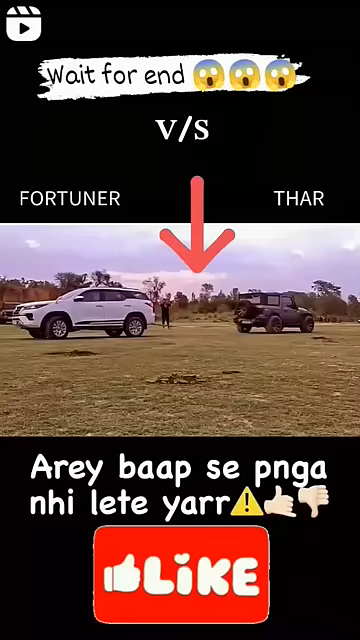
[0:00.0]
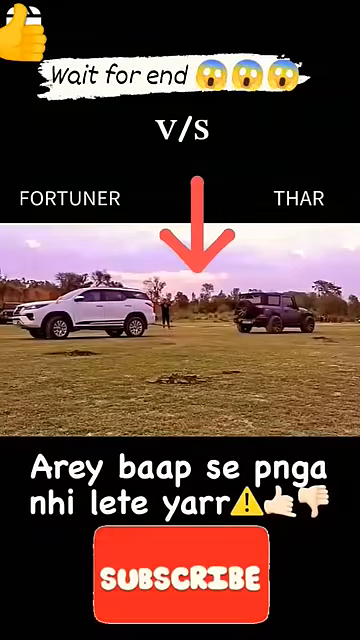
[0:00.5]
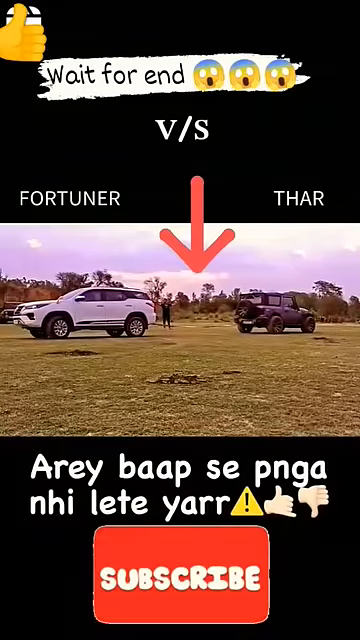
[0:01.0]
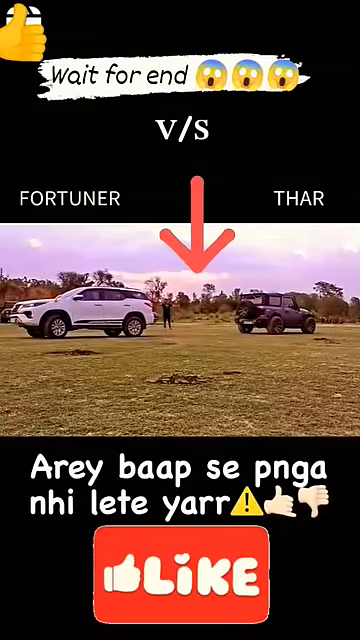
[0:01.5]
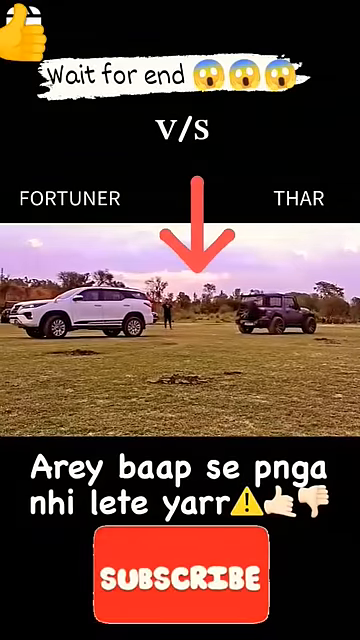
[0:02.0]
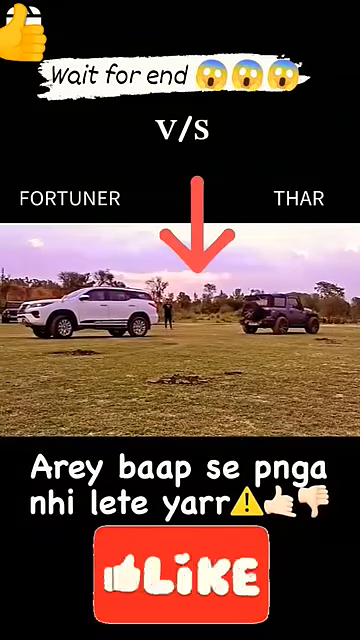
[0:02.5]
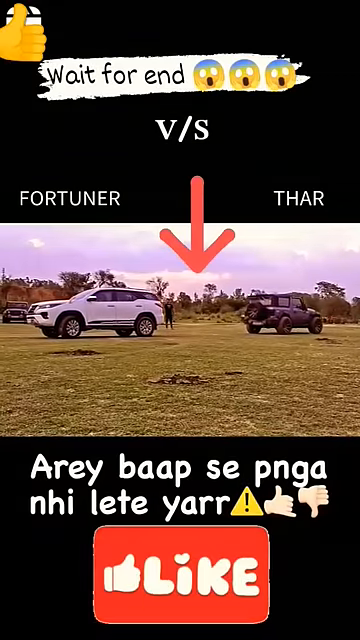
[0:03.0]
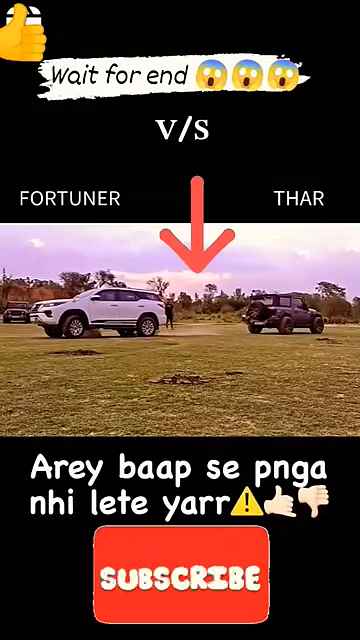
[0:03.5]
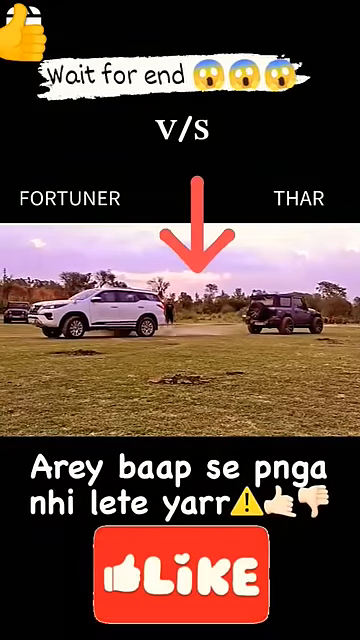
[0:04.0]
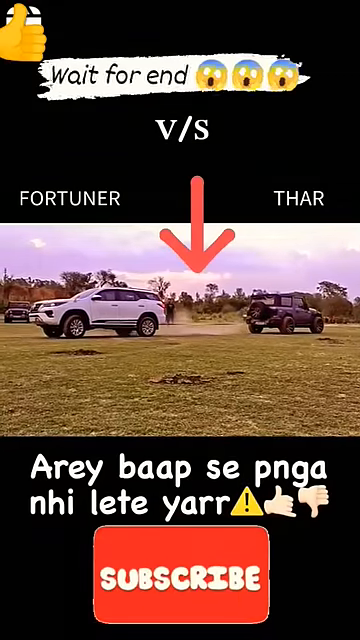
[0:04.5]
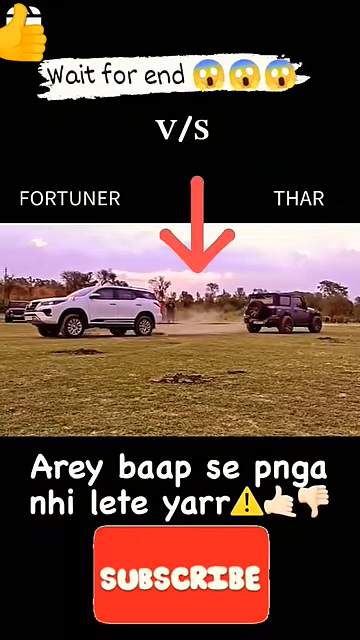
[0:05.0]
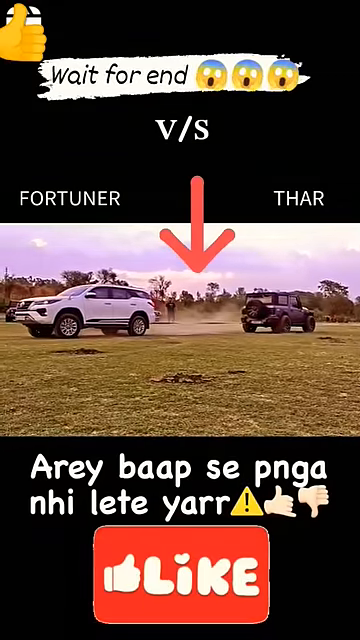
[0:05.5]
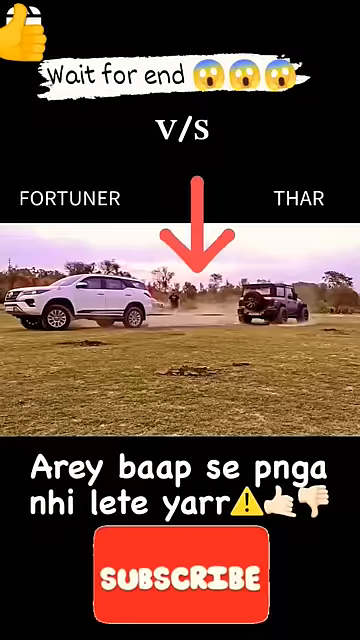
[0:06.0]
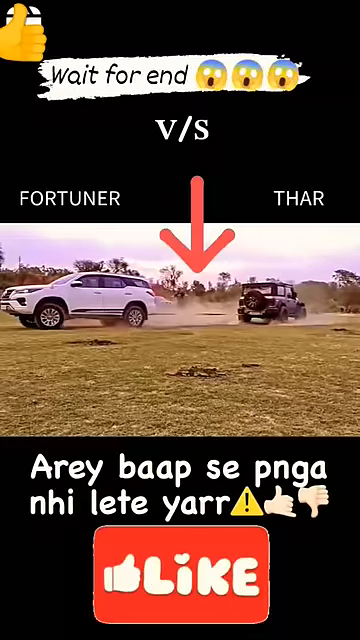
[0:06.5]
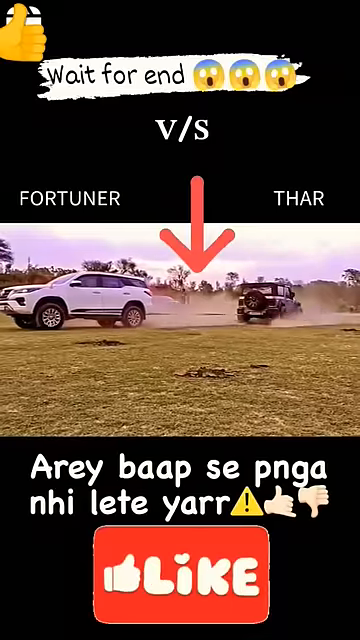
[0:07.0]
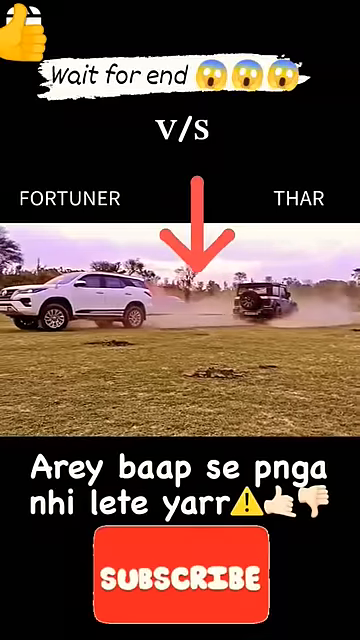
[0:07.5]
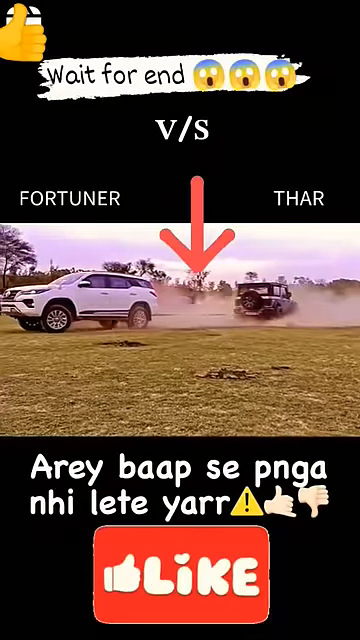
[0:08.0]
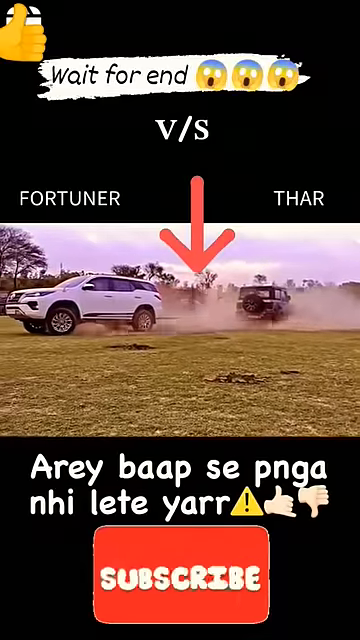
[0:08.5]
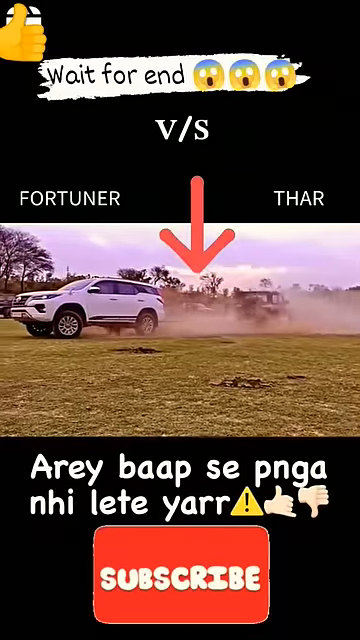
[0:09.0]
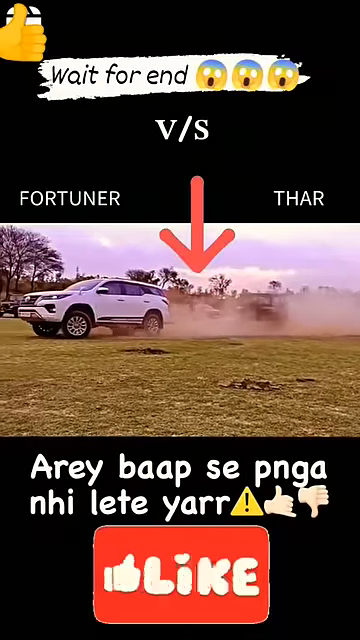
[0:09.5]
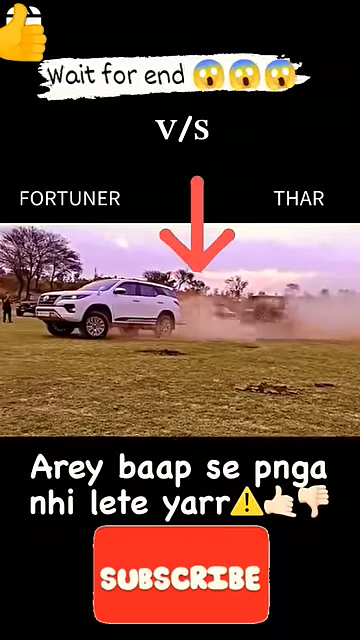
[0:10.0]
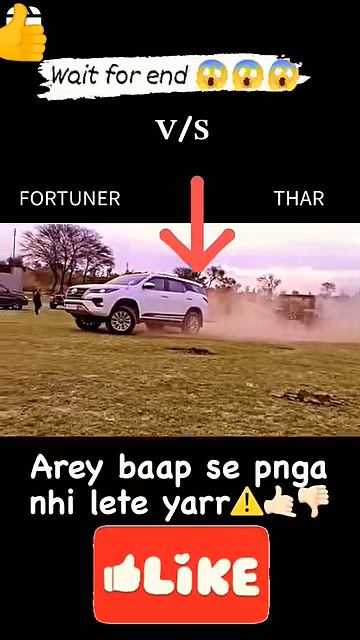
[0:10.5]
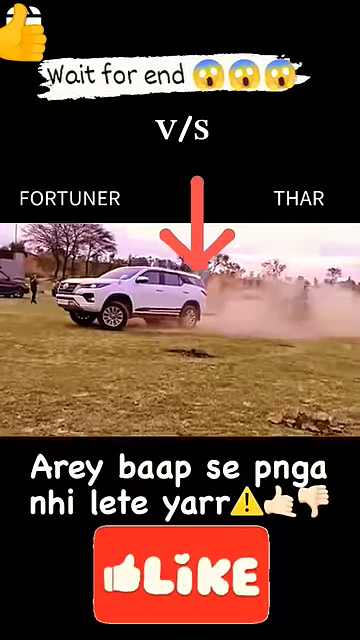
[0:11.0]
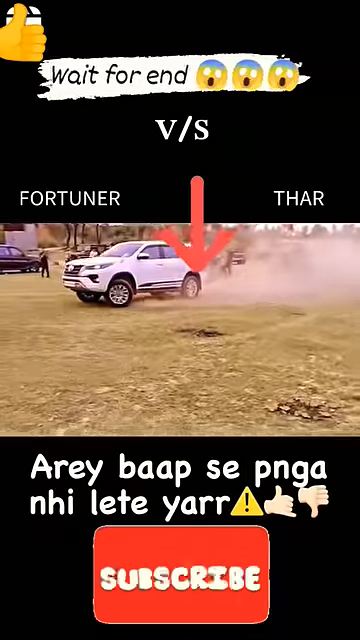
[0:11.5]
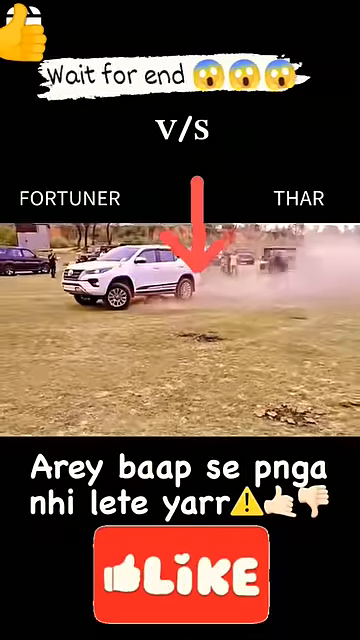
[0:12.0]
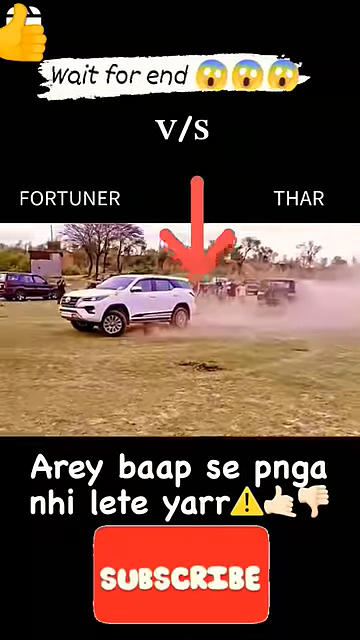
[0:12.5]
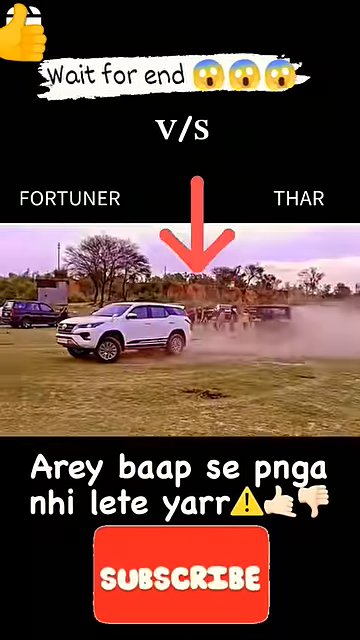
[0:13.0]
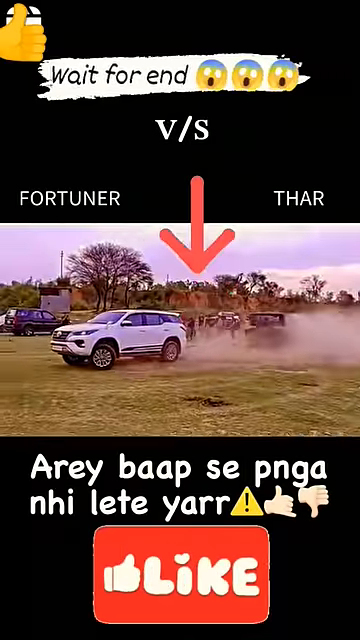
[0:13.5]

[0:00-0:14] A white Toyota 4Runner is attached to a Jeep by what appears to be a rope, and at the center of the rope is an arrow pointing down. The 4Runner pulls the Jeep behind it by the rope, pressing forward and pulling until the Jeep moves. Both vehicles throw dirt everywhere from their tires. The Jeep veers off somewhat toward the right but stays behind the 4Runner. They move maybe about 10 feet across the grass, where all of this takes place, with trees in the background. One person stands maybe about 10 feet away, at the center between the two vehicles. It is unclear whether anyone is driving the Jeep.